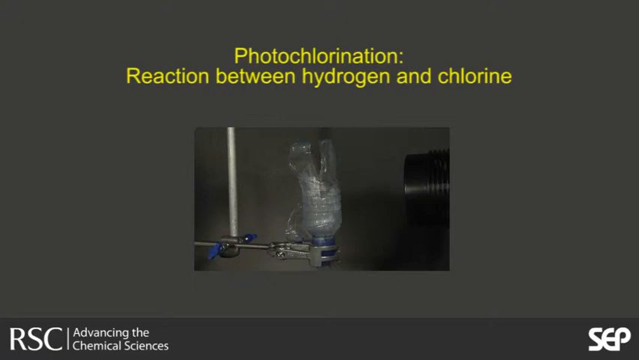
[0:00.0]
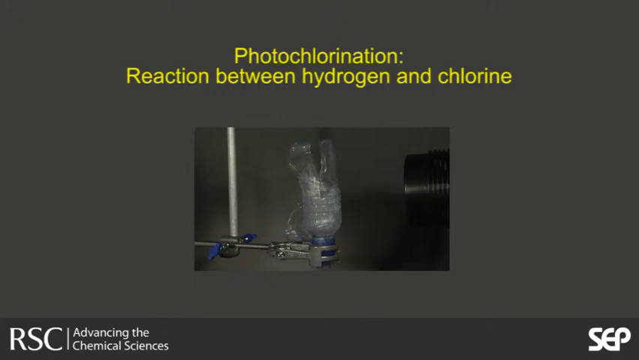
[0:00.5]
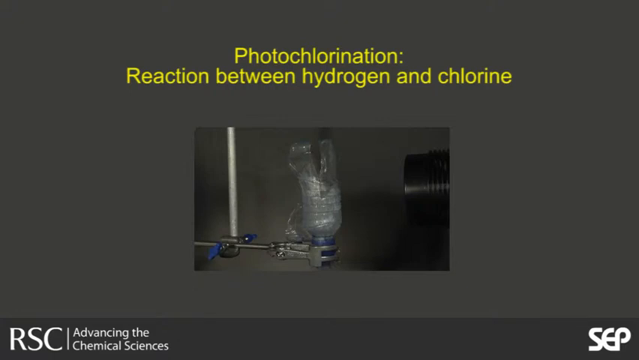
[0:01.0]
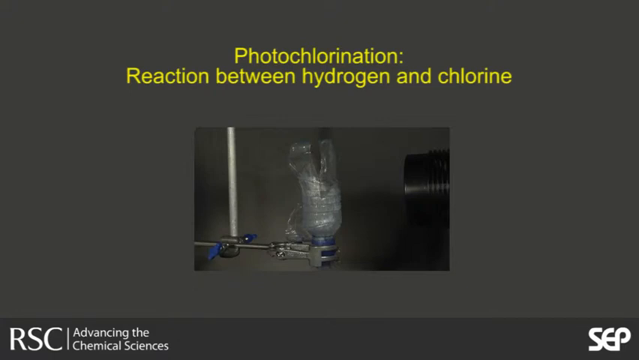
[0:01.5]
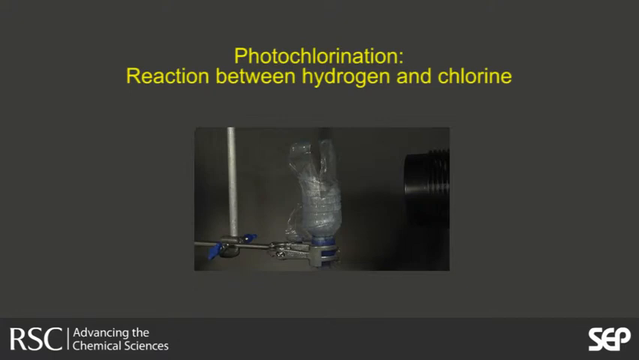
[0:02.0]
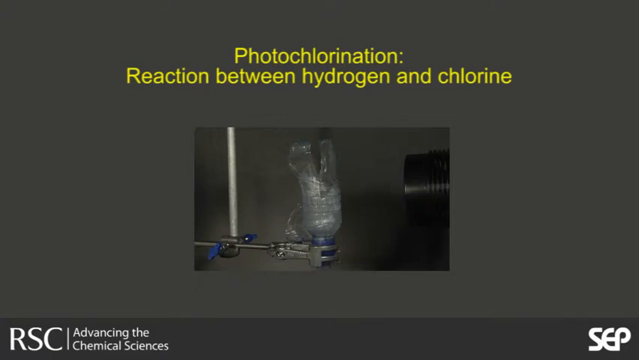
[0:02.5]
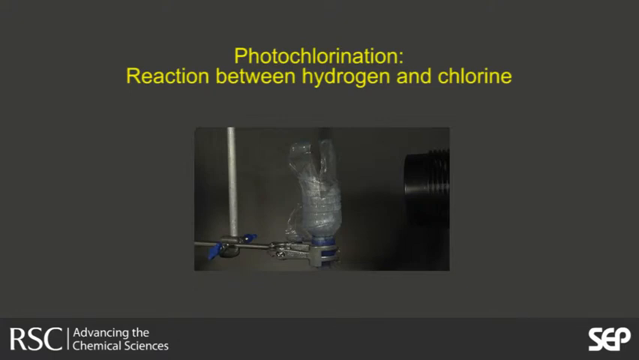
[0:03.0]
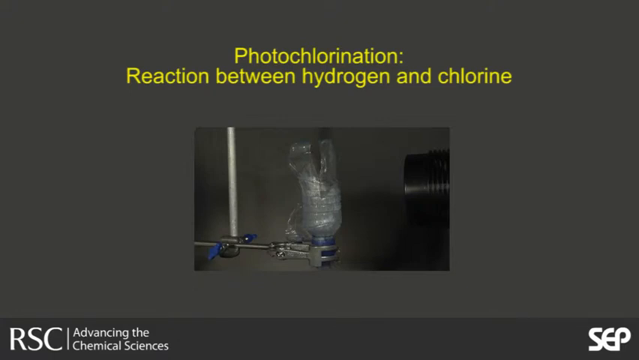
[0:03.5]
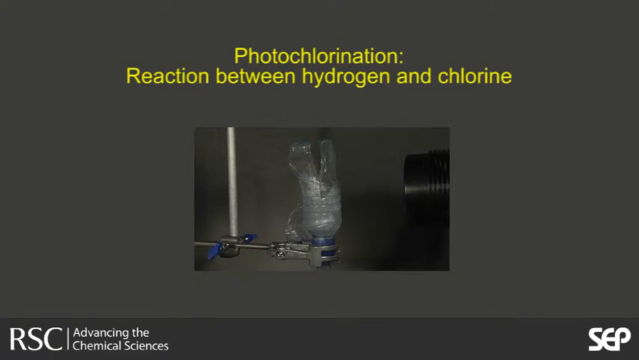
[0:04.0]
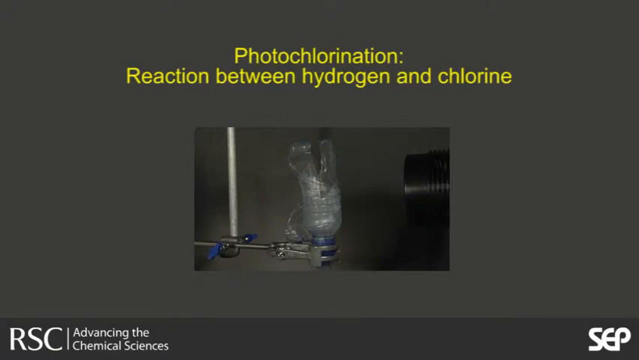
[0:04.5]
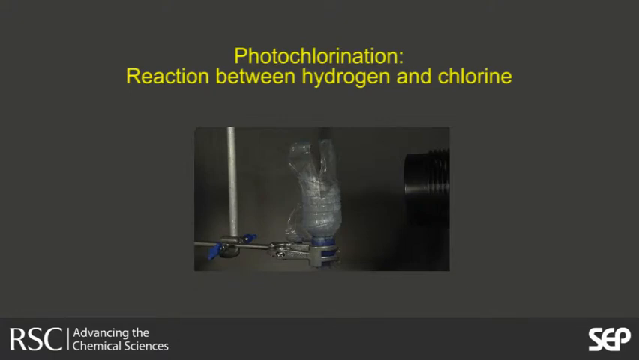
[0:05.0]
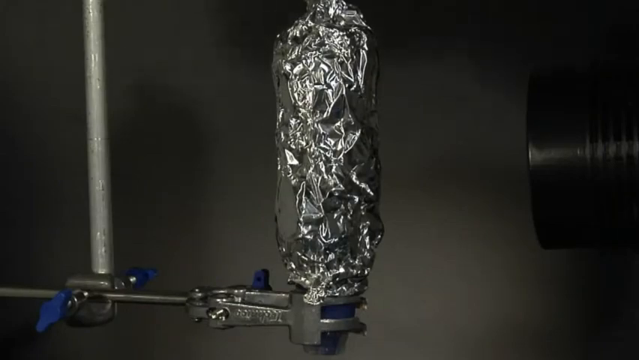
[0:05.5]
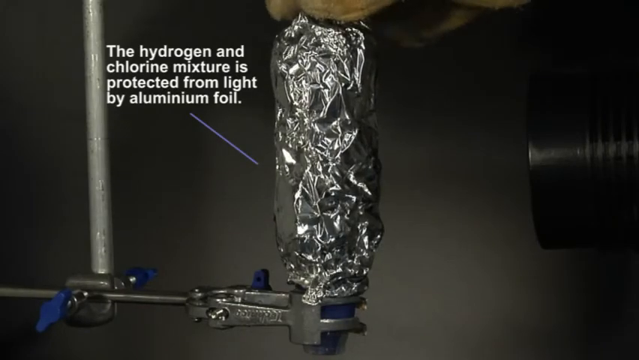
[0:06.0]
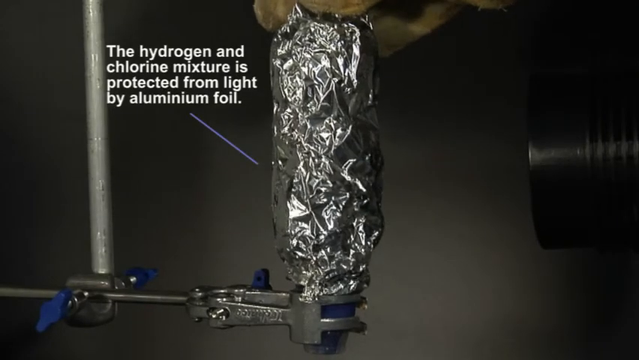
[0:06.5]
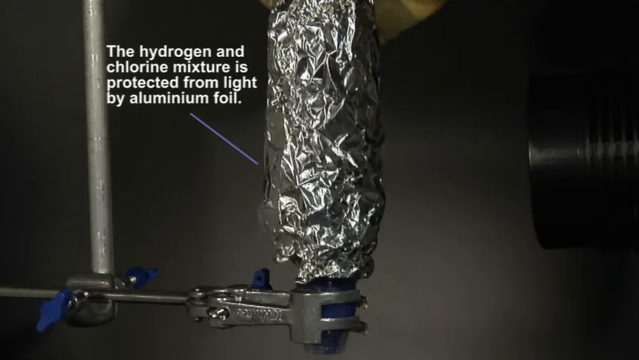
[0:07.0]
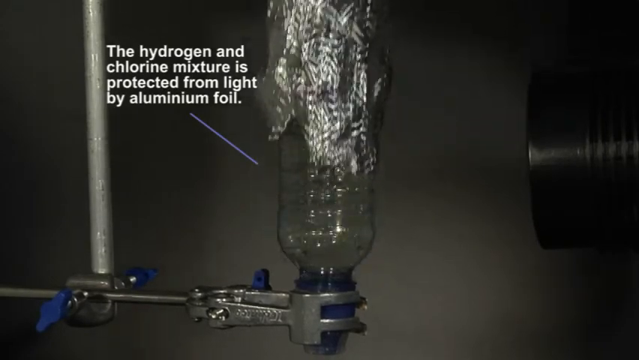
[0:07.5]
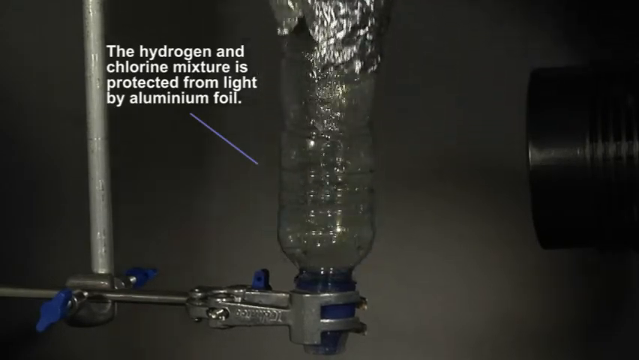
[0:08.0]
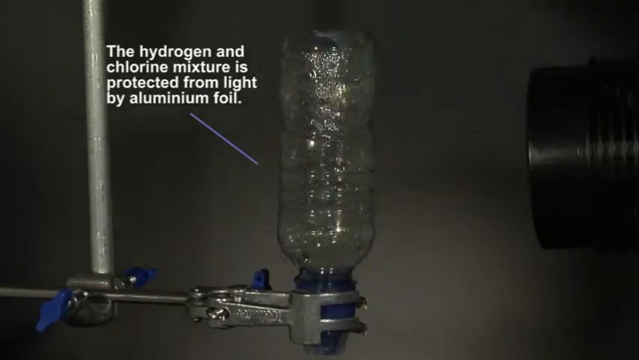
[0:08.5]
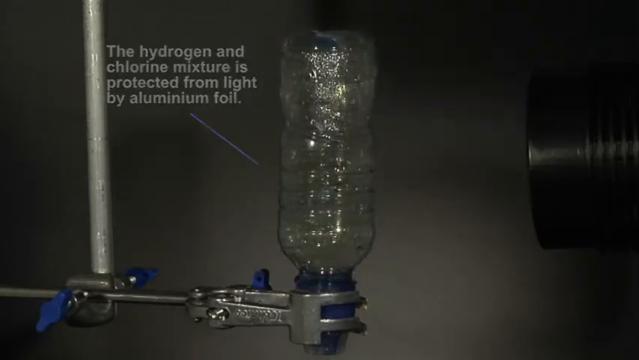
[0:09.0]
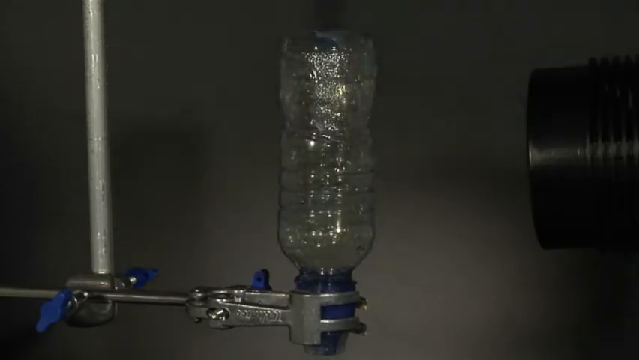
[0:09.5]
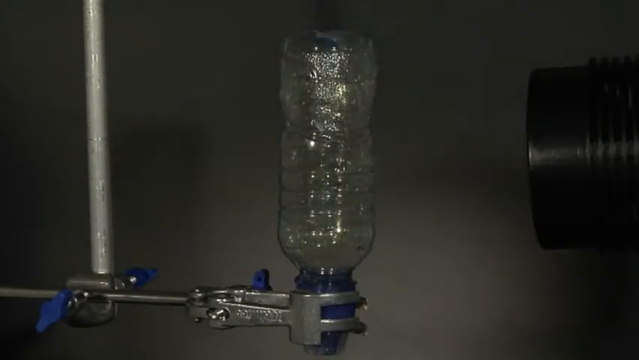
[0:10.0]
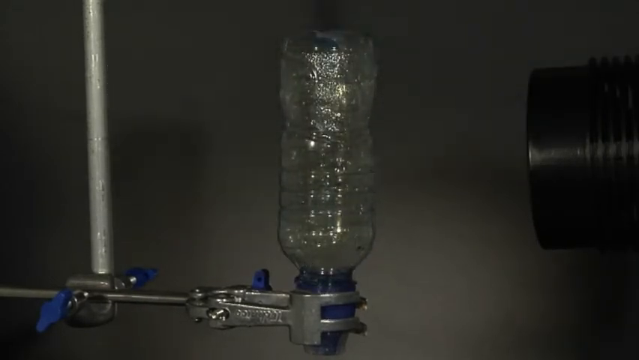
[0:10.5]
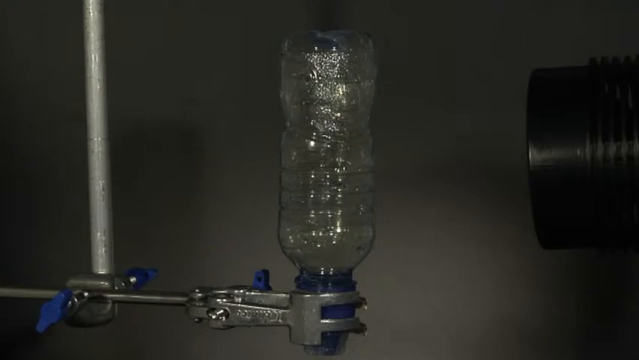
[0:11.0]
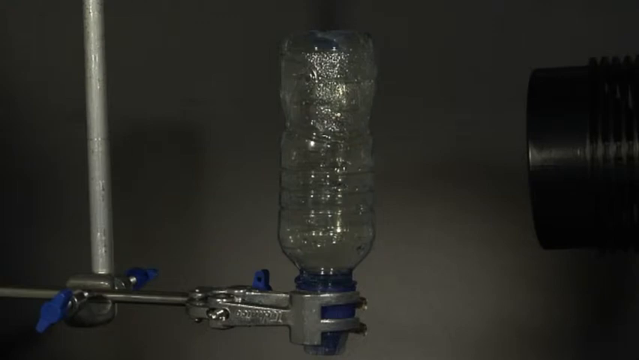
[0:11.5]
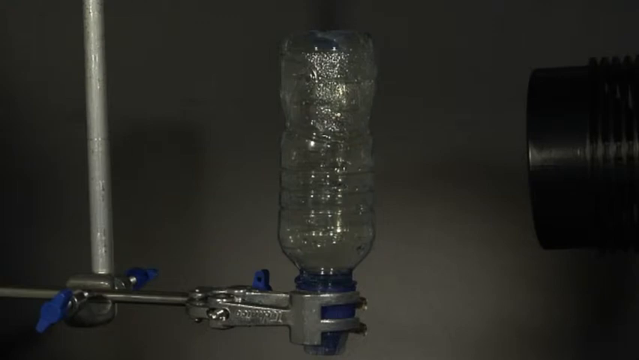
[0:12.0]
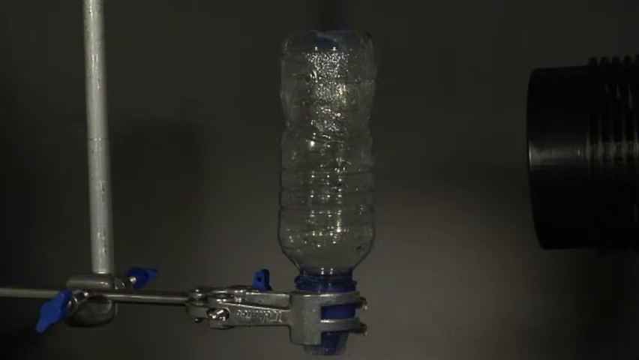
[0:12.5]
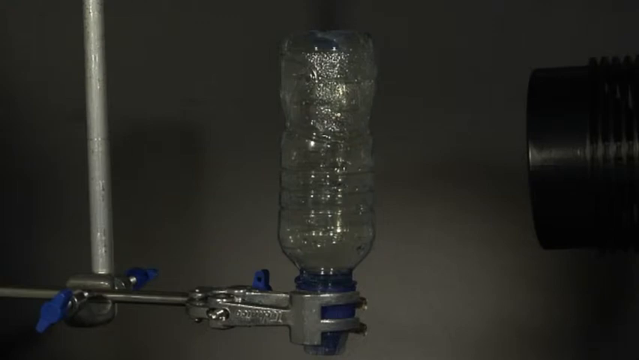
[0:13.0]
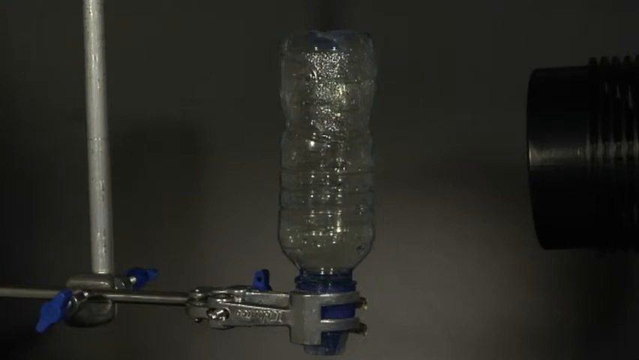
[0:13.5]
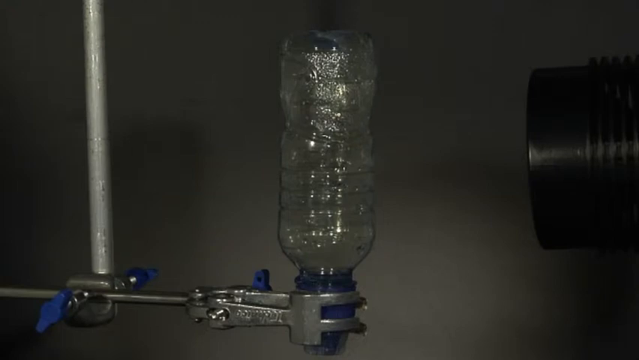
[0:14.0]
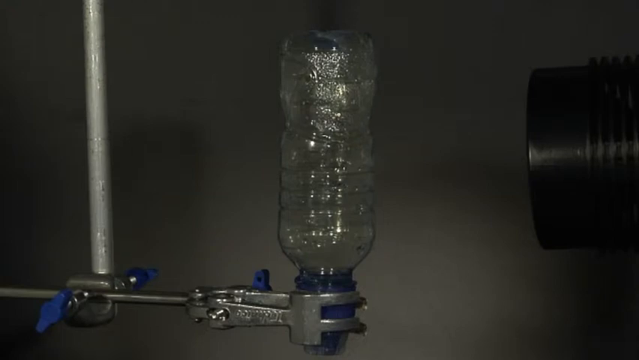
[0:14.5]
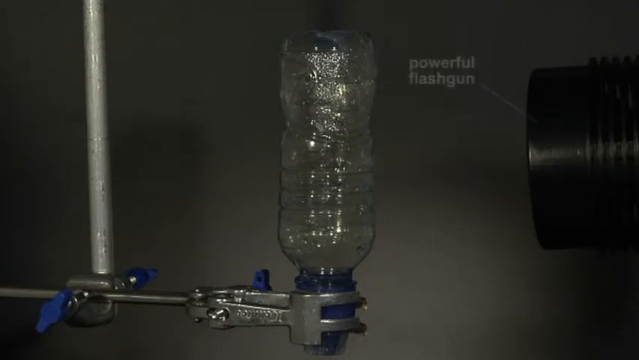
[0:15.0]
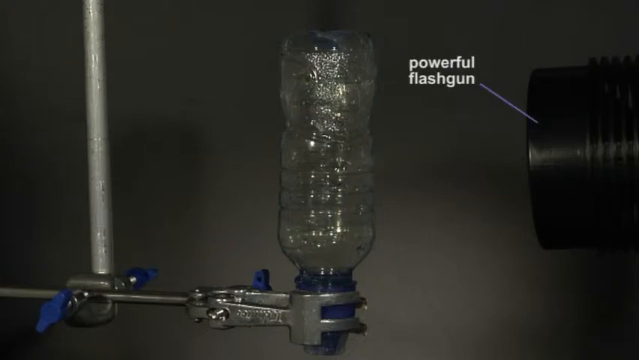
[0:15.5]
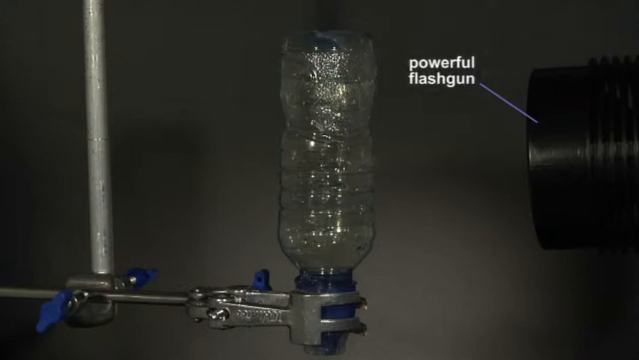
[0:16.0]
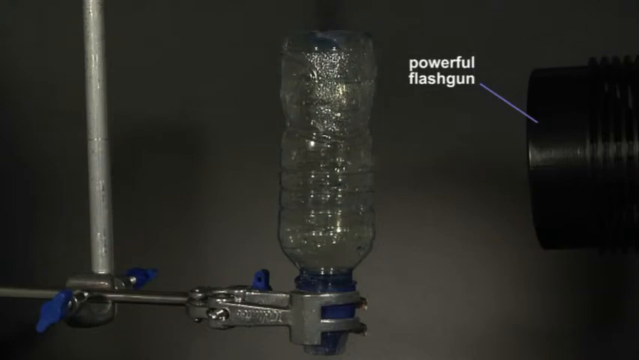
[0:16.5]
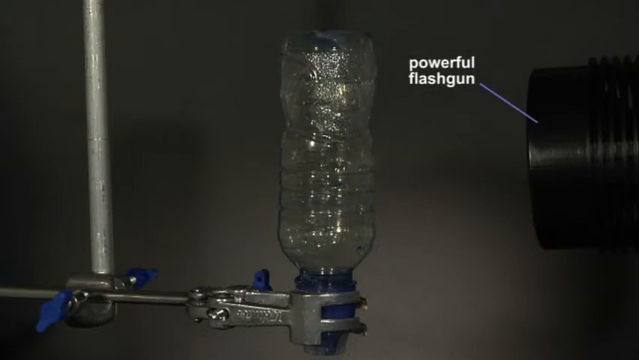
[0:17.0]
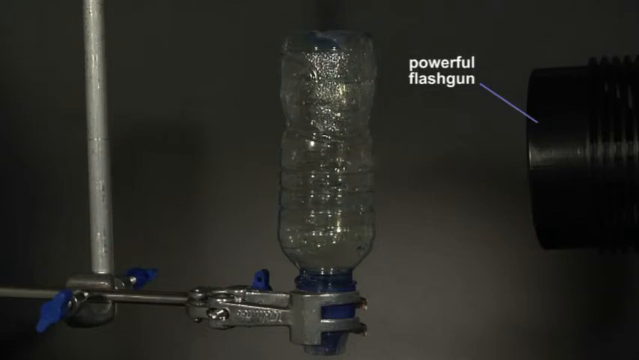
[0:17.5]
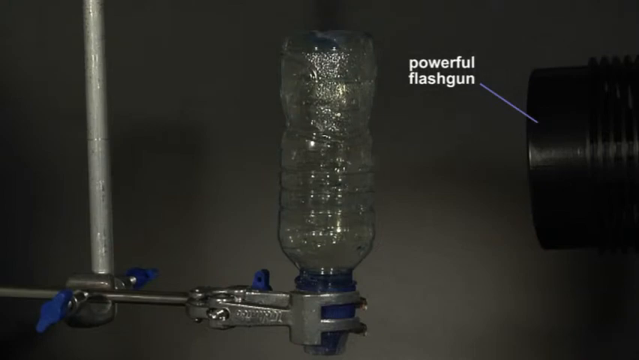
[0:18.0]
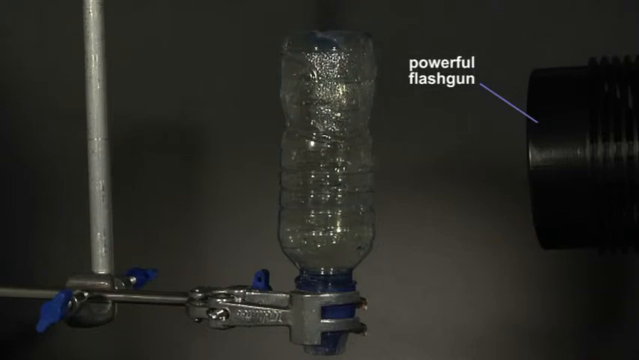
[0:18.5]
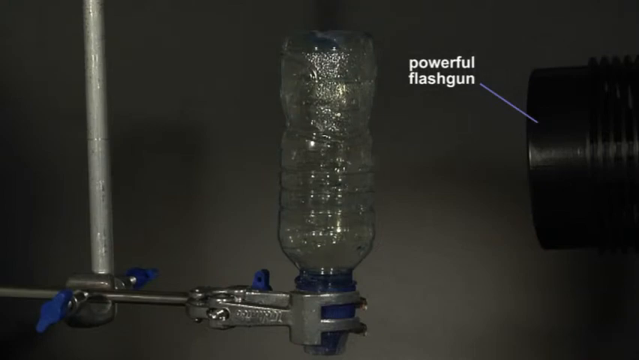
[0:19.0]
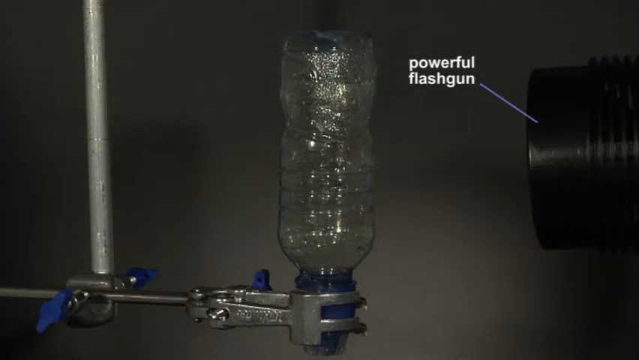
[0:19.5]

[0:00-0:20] On-screen text reads "photo chlorination" and "reaction between hydrogen and chlorine." There is something like a bottle, possibly a busted bottle. Text reads "advancing the chemical sciences," followed by "the hydrogen and chlorine mixture is protected from light by aluminum foil." Aluminum foil covers what looks like an upside-down water bottle, and the foil is being removed. The water bottle looks like it is dripping a little, and it looks pretty clear, so it is unclear whether anything is in it. Text reading "powerful flash gun" appears right next to it.